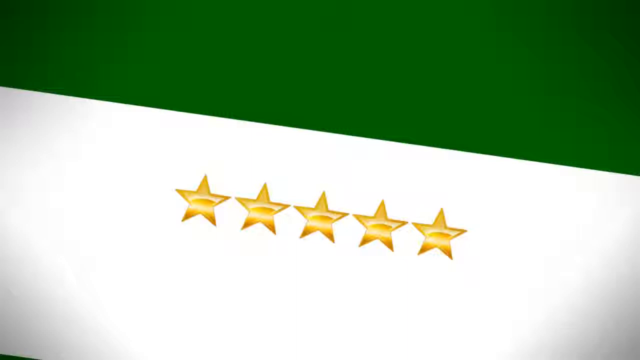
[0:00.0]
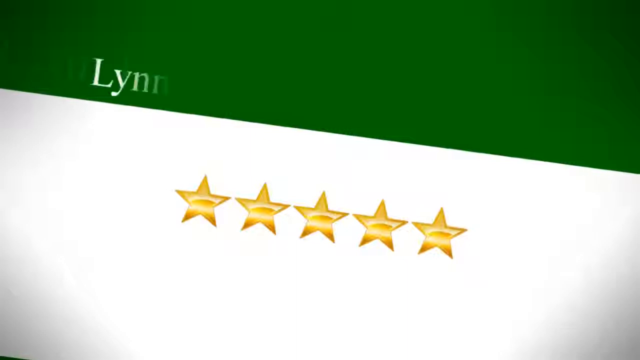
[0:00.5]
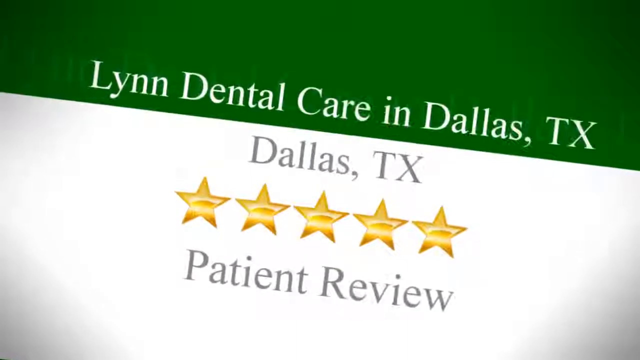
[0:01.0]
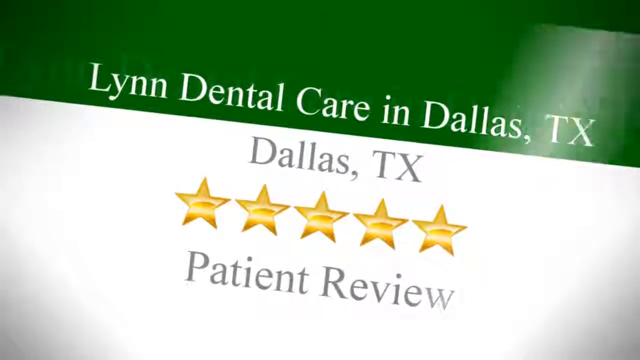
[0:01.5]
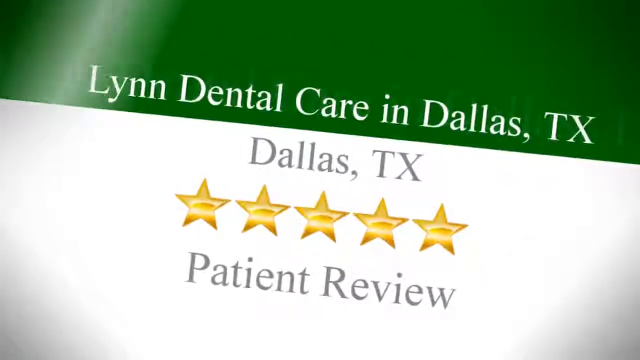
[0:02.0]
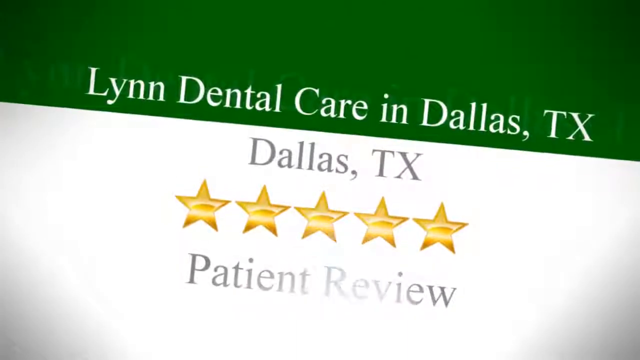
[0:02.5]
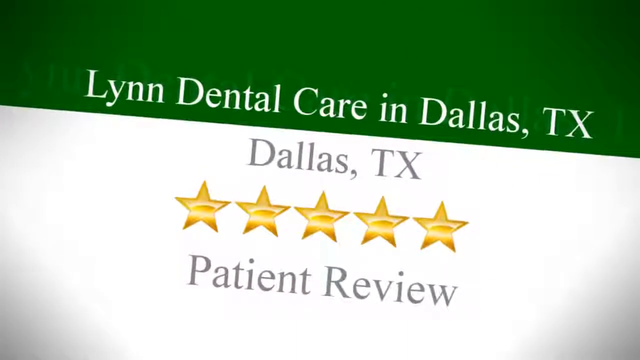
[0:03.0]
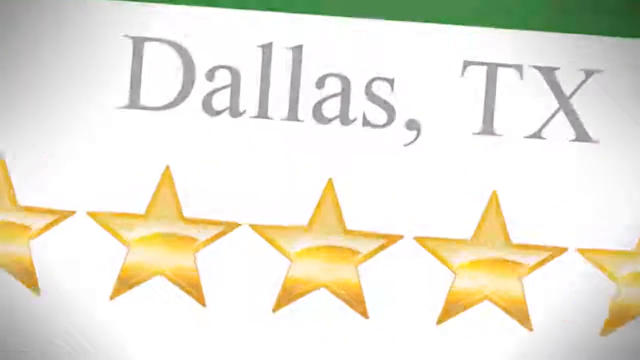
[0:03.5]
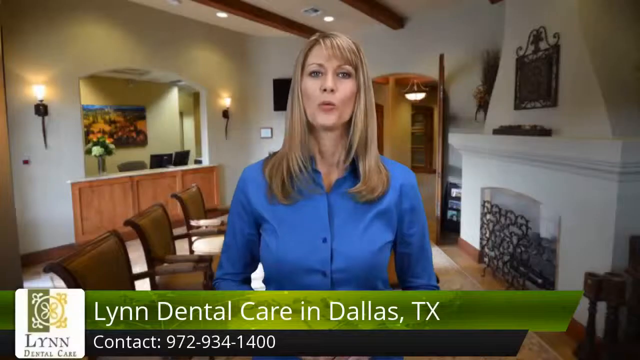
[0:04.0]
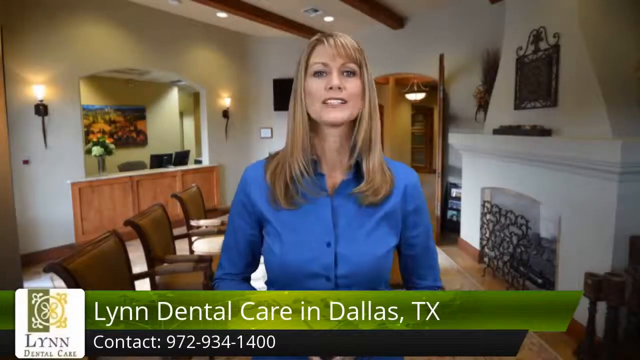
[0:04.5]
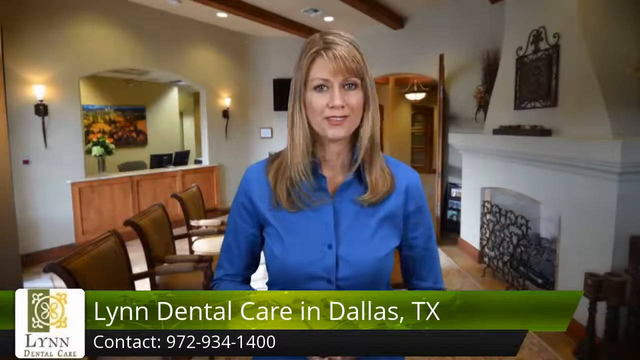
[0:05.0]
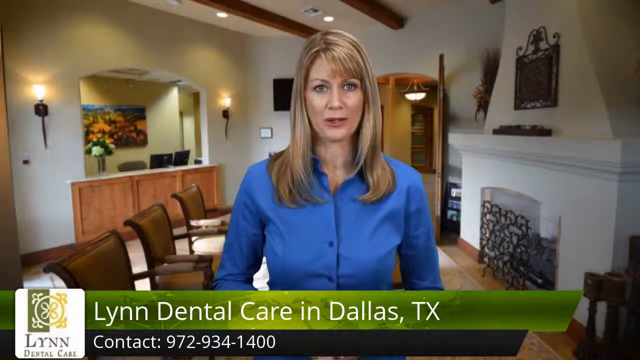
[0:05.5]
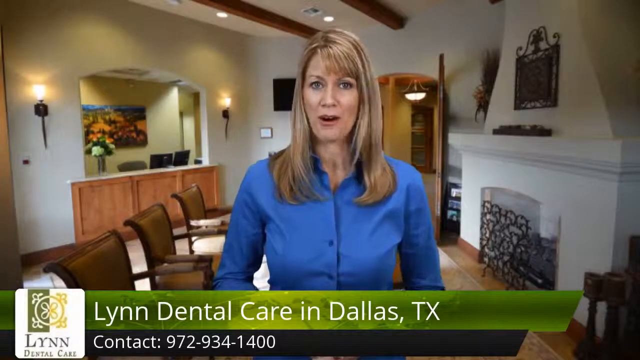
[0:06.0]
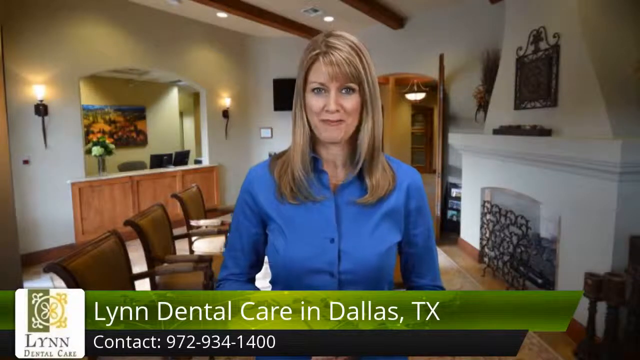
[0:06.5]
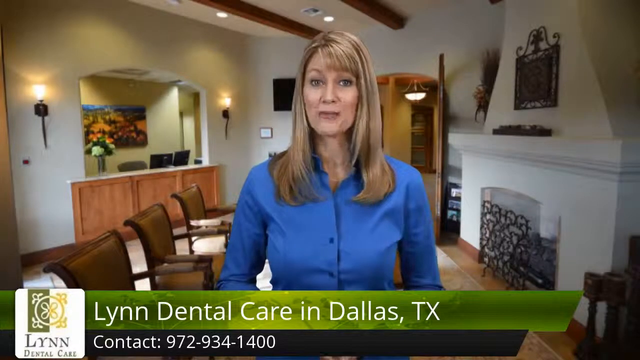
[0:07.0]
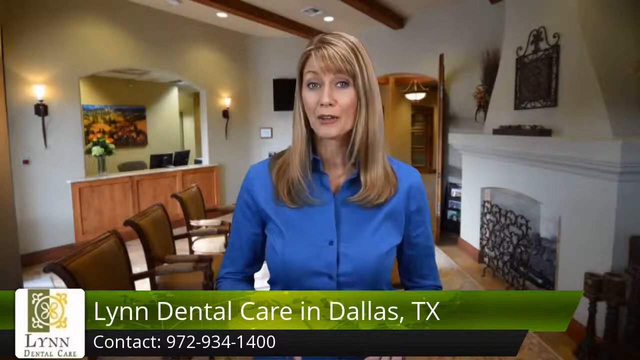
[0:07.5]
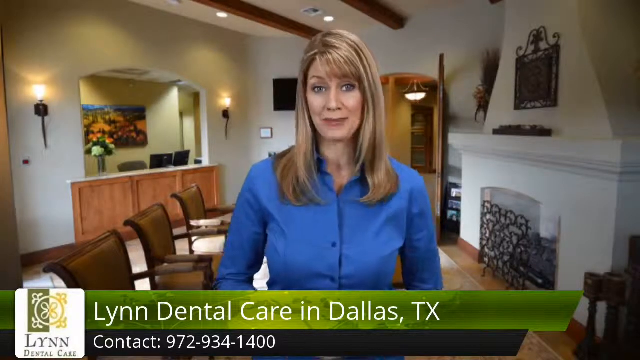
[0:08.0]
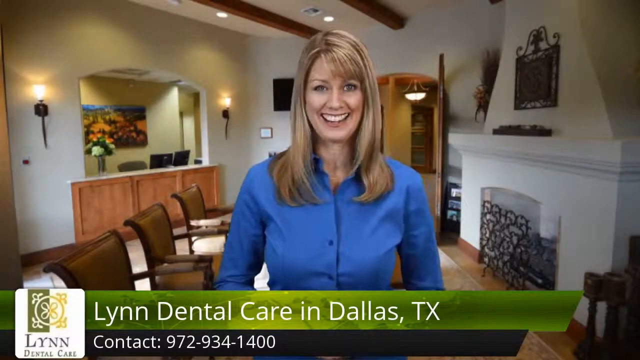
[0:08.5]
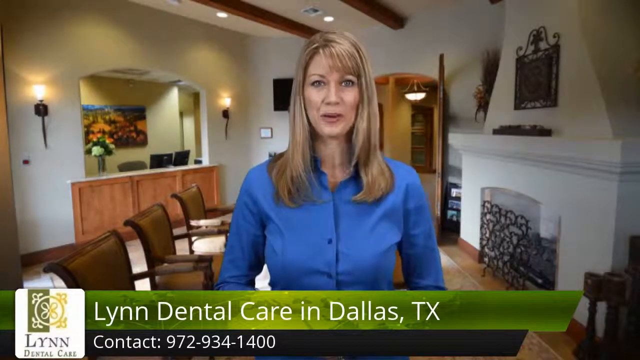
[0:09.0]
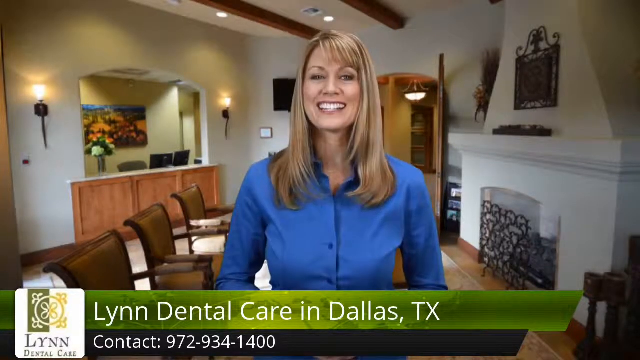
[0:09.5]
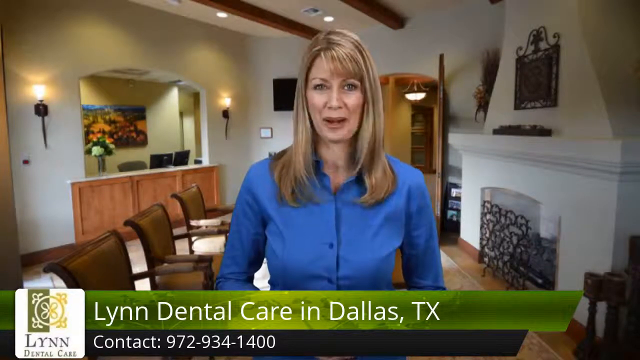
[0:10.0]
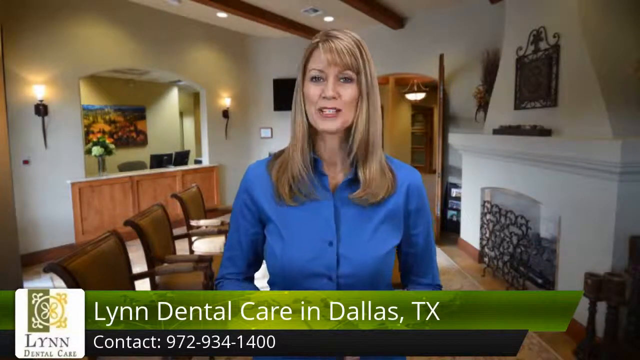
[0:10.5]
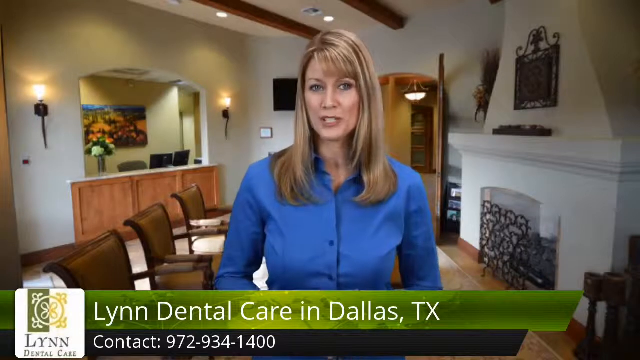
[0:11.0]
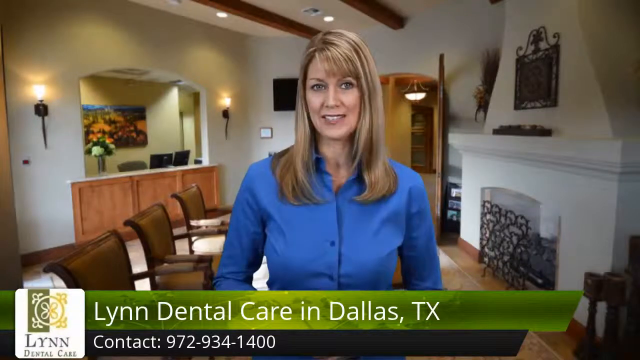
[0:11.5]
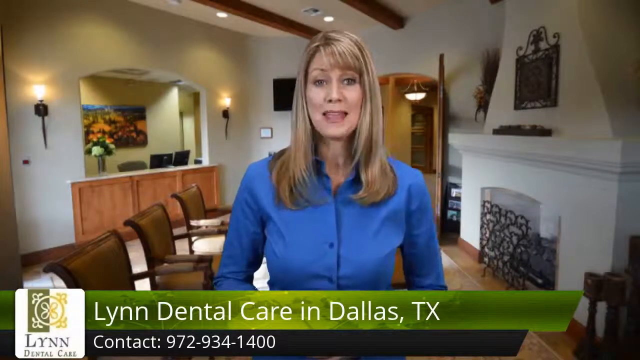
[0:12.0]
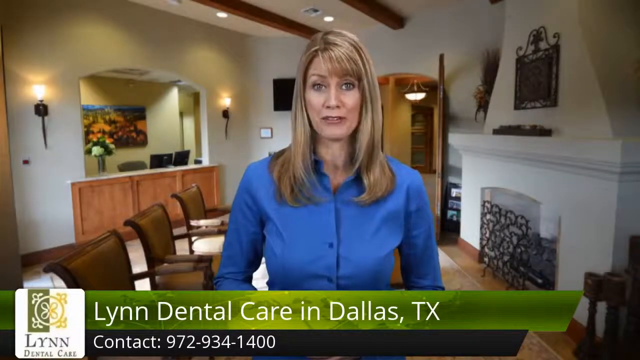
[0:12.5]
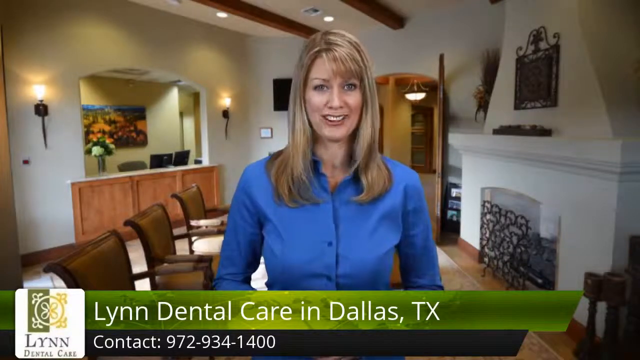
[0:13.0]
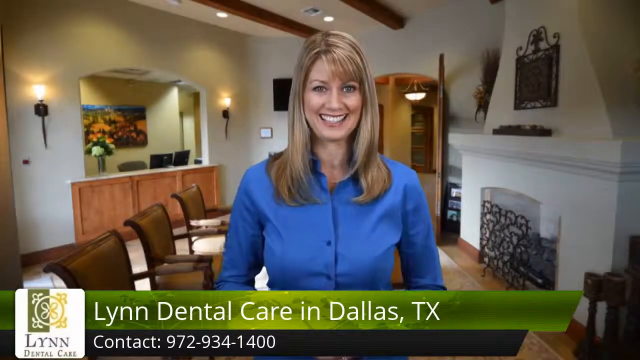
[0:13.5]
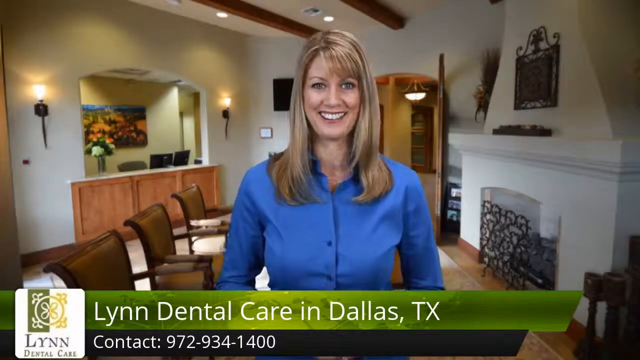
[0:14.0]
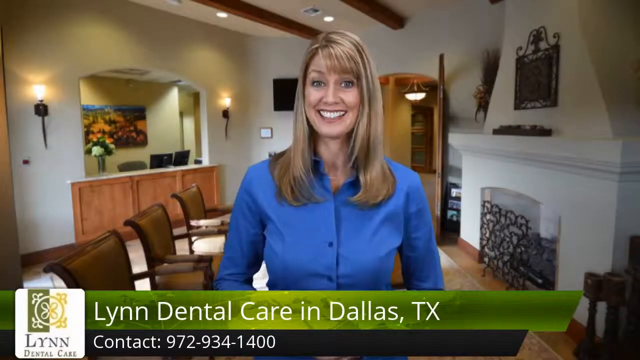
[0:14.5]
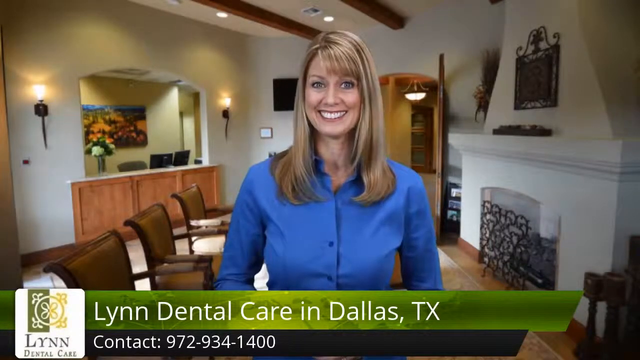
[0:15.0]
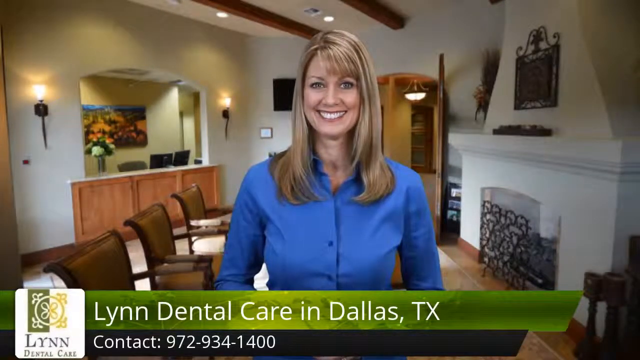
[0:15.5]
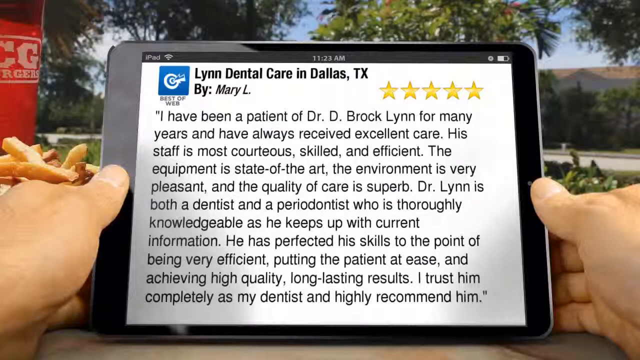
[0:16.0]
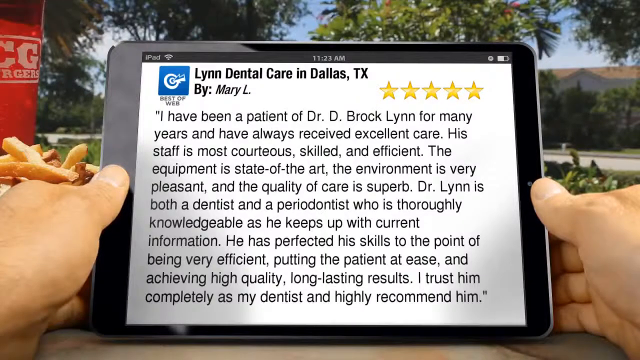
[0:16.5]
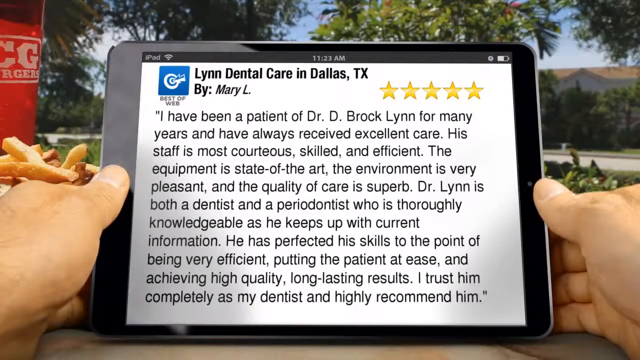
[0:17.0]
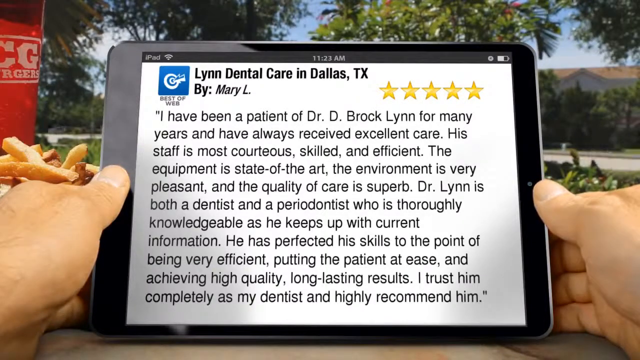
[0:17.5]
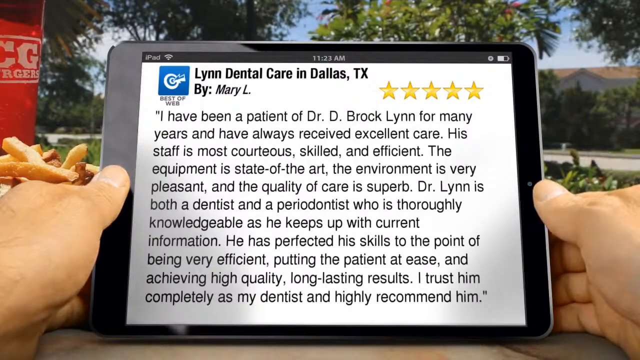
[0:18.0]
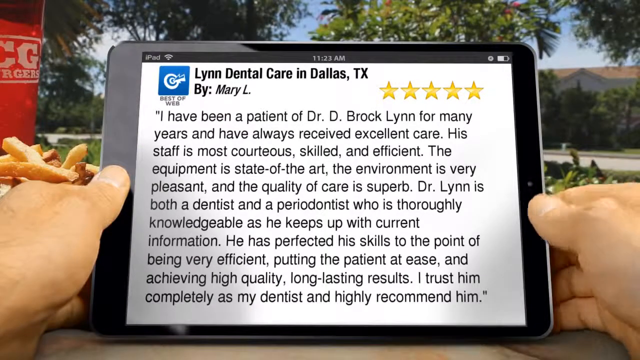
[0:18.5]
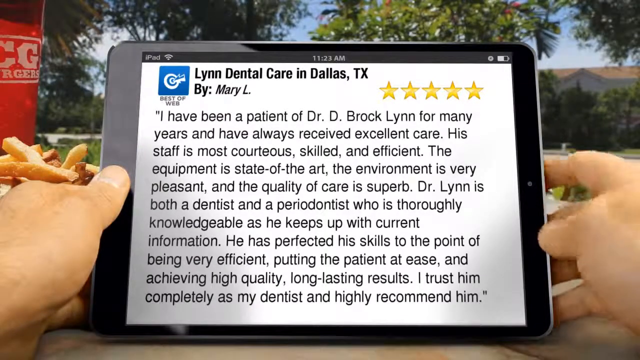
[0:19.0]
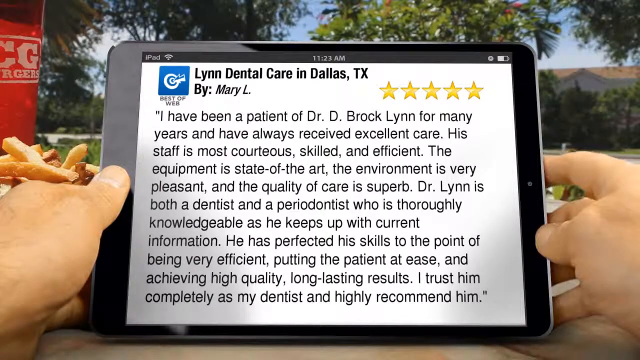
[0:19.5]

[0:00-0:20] Five gold stars appear across a white and green screen with the text "Lynn Dental Care in Dallas, Texas" and a five-star patient review. The screen cuts to a white woman wearing a crisp long-sleeve button-down dress shirt, with golden blonde hair to her chest and side-swept bangs. She smiles at the camera and looks excited. She is standing in an office area that looks like the waiting room, with brown chairs, a fireplace and some decor. There is a concierge with laptop or computer screens where one would walk up for an appointment, and a wrought iron screen against the fireplace. The video cuts to a review about the dentist, the quality of her care and the dentist's expertise. The review is on an iPad screen held by a man's hands against a picture of a neighborhood, with fries in the background.